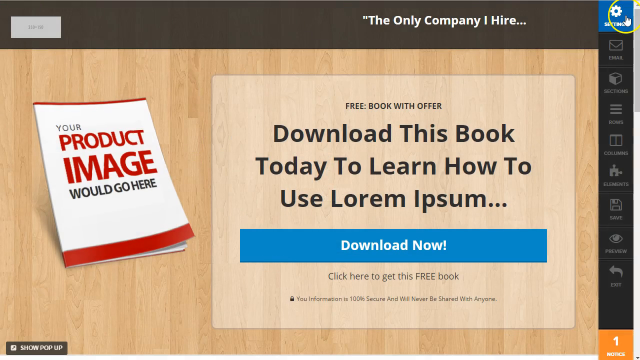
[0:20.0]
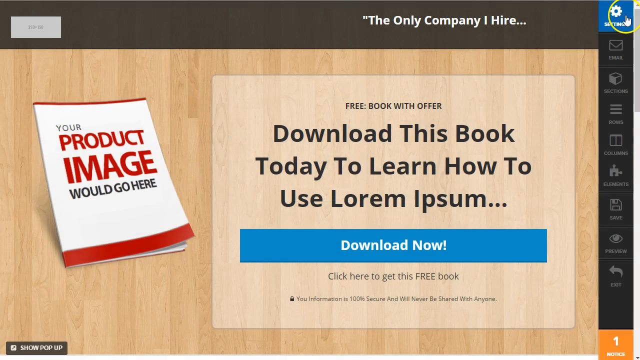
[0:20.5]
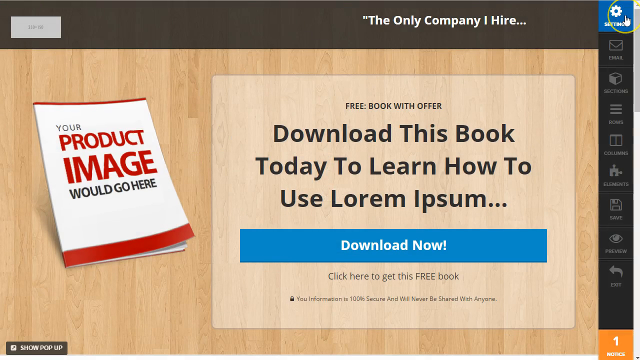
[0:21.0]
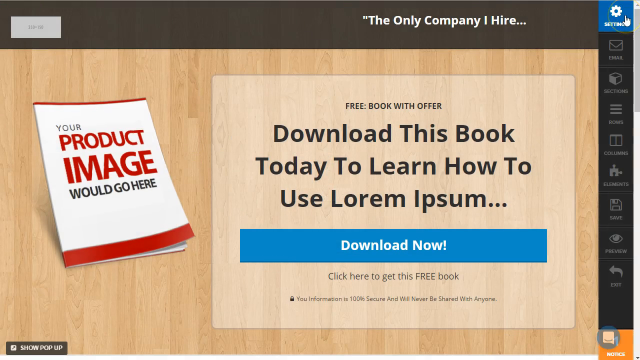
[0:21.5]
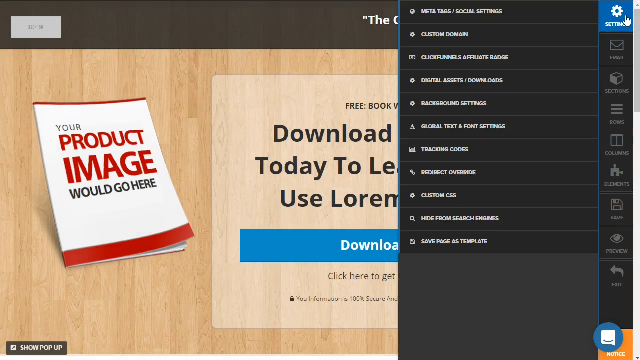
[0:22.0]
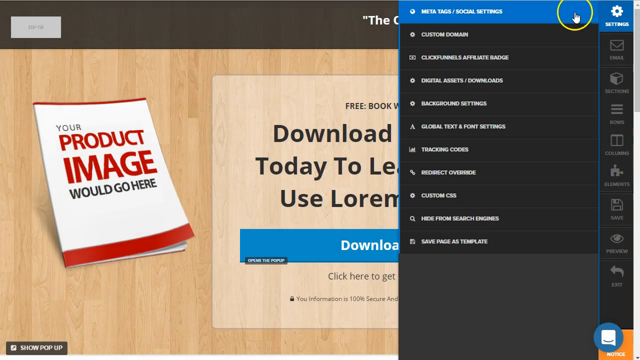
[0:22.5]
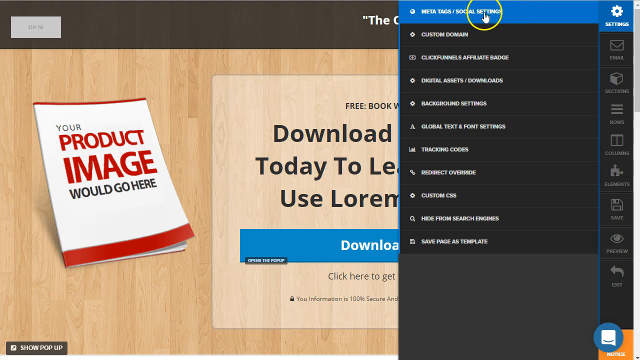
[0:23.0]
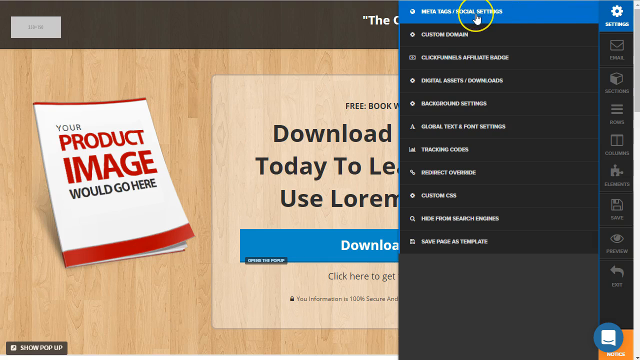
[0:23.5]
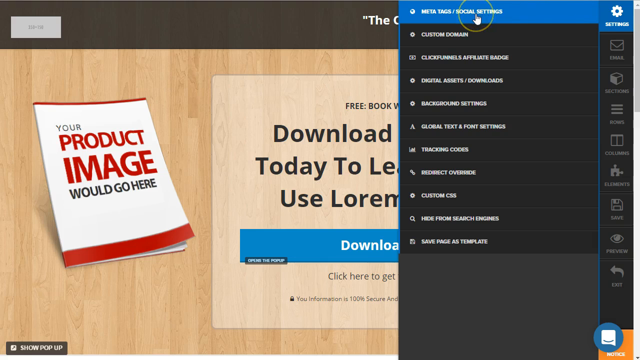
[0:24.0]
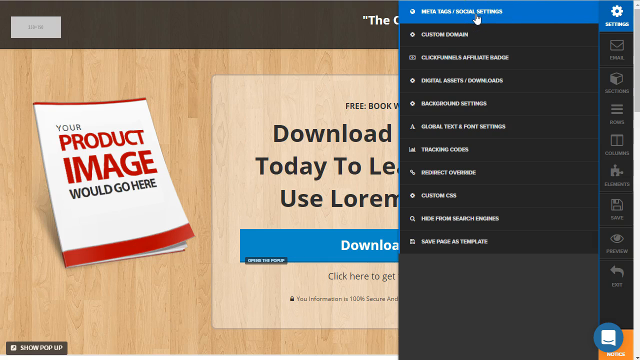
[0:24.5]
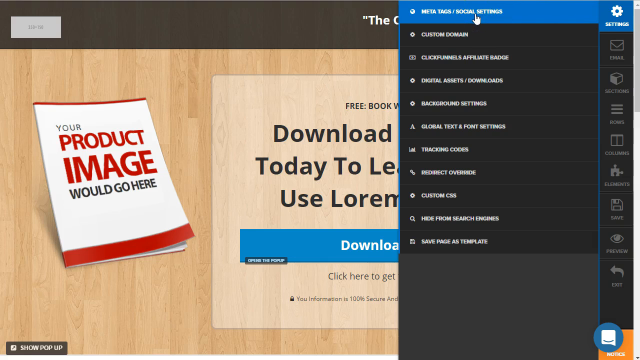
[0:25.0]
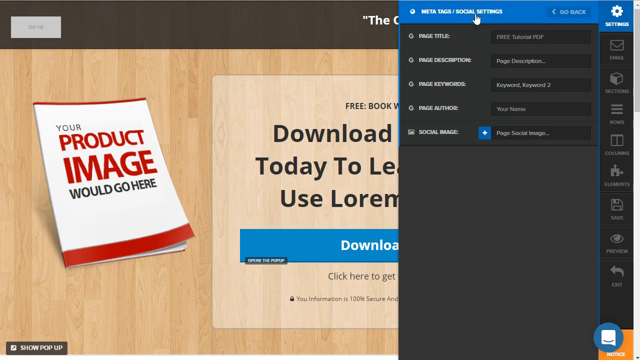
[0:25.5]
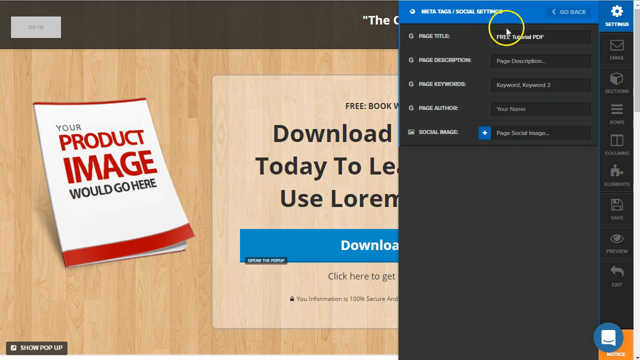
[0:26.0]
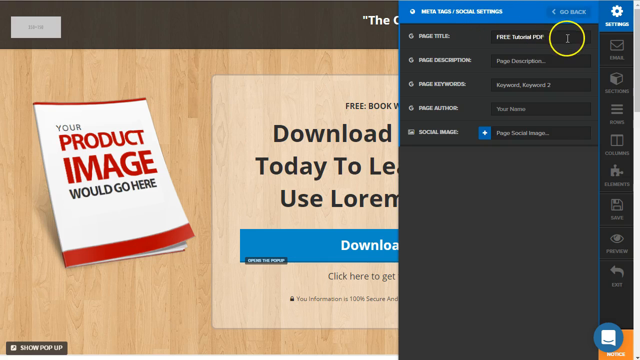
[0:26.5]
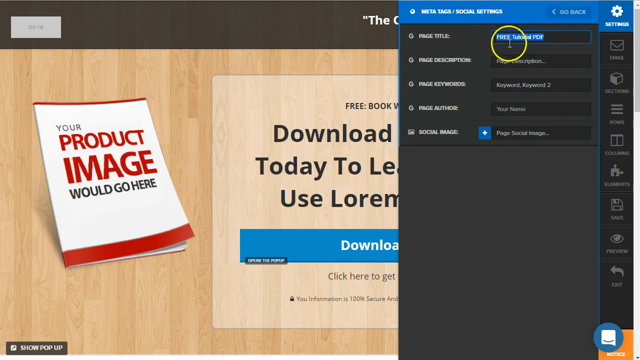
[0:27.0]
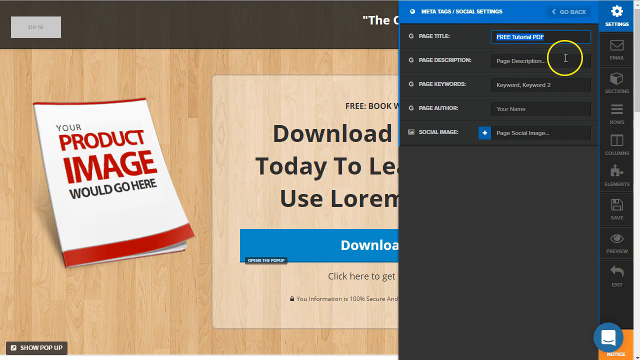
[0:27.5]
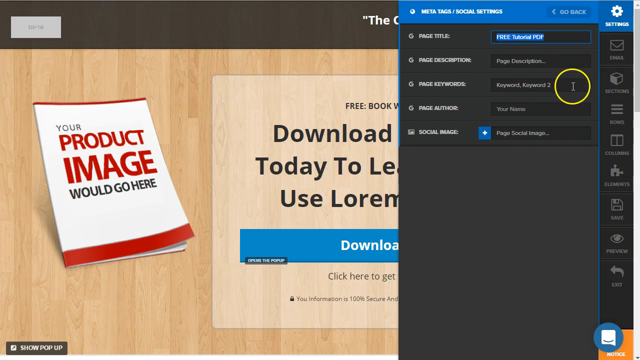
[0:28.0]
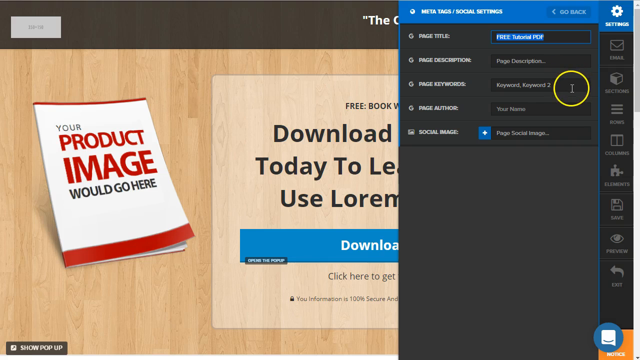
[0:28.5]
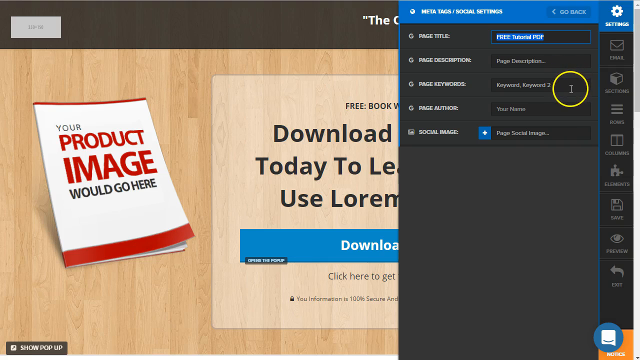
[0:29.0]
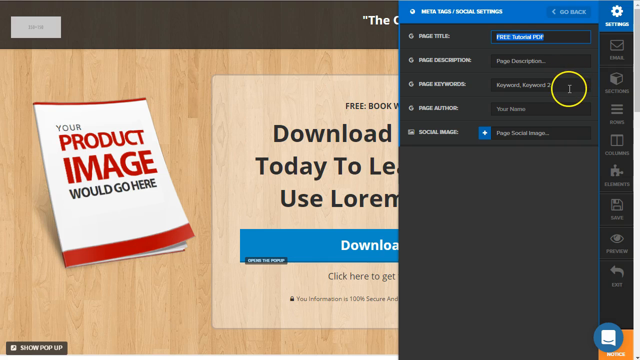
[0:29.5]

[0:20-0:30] A page shows a book labeled "your product image would go here," with a template telling how to download this book today to learn how to use Lorem Ipsum. There is a blue "download now" bar and text saying "click here to get this free book." At the very top it says "free book with offer," and the heading on the page says "the only company I hire." The page is an advertisement about how to better promote one's own business.